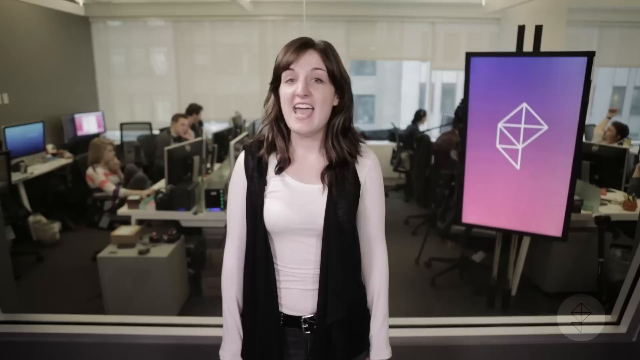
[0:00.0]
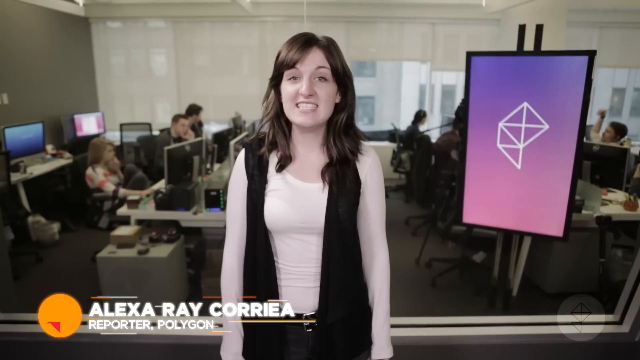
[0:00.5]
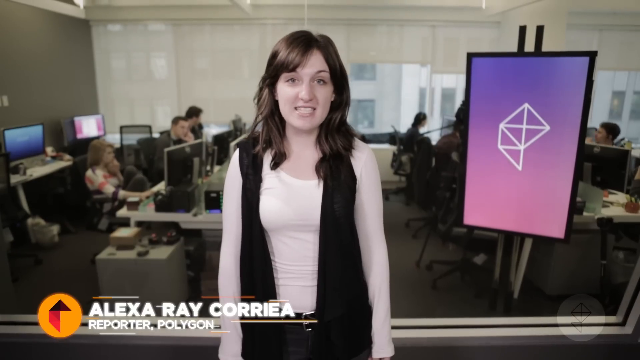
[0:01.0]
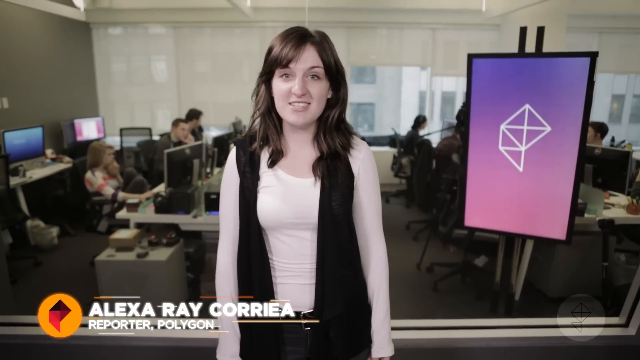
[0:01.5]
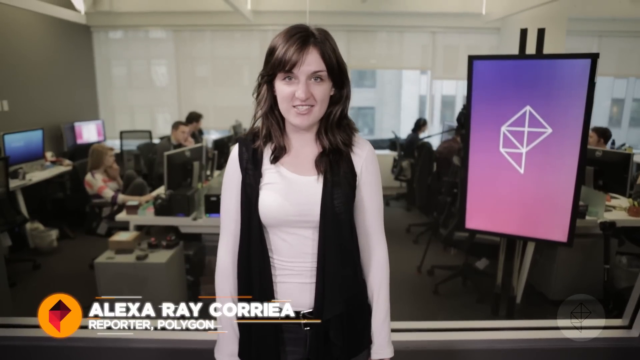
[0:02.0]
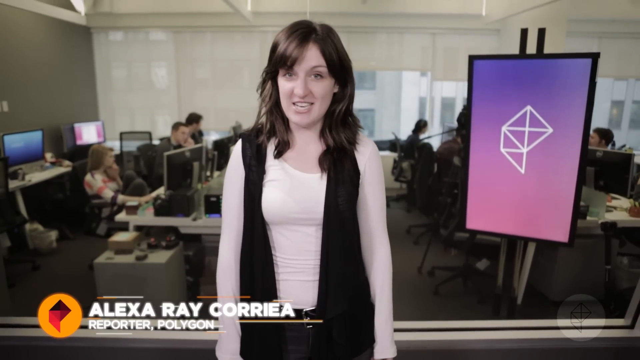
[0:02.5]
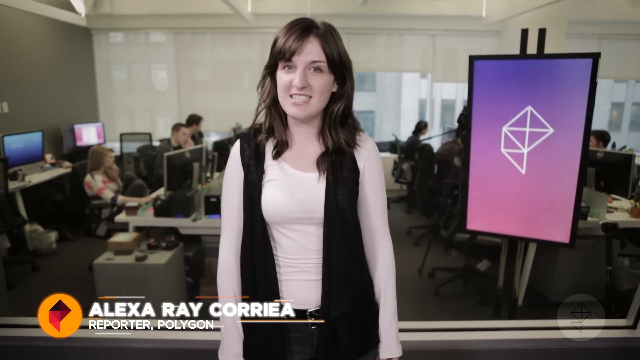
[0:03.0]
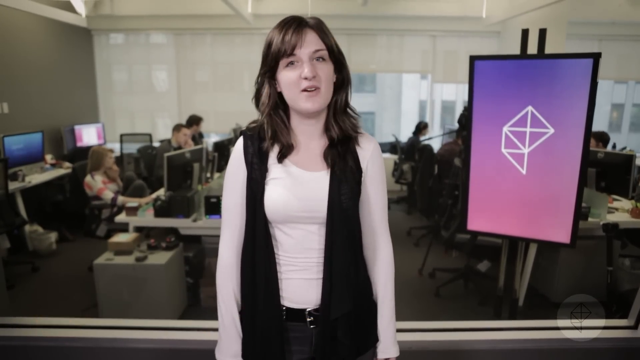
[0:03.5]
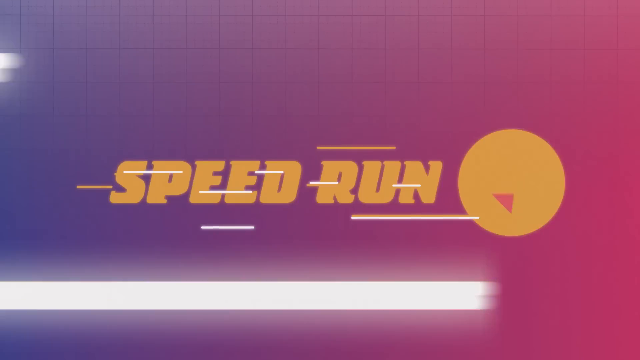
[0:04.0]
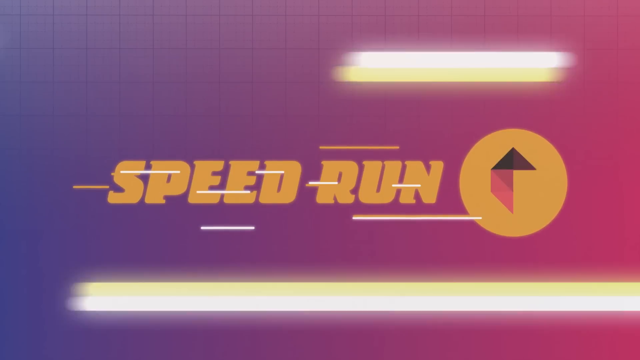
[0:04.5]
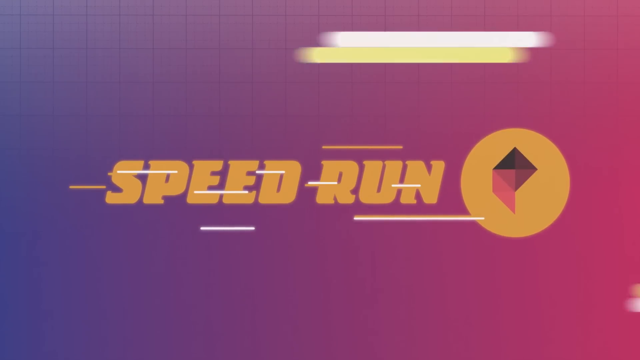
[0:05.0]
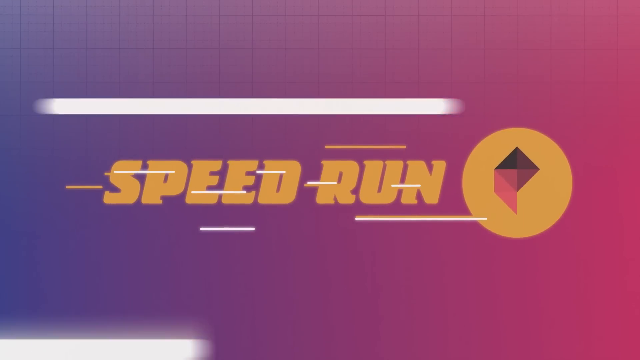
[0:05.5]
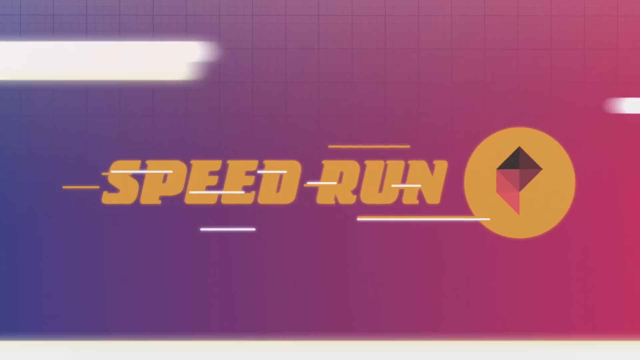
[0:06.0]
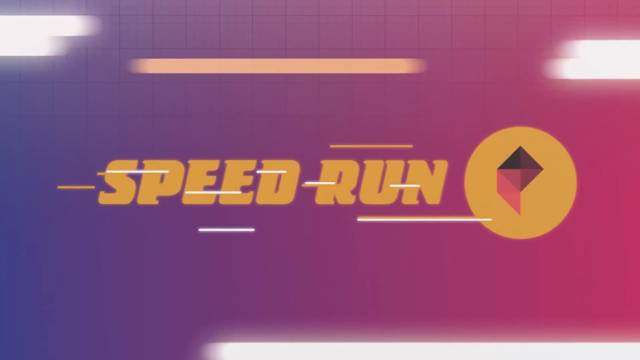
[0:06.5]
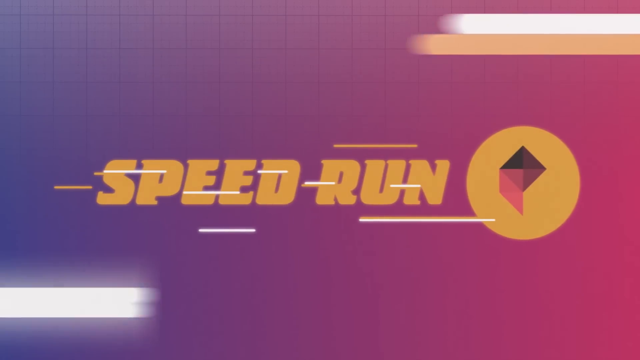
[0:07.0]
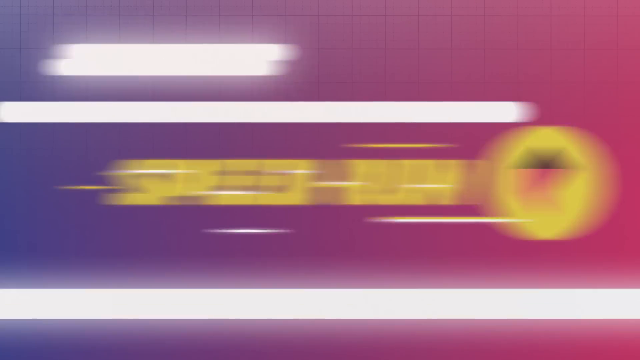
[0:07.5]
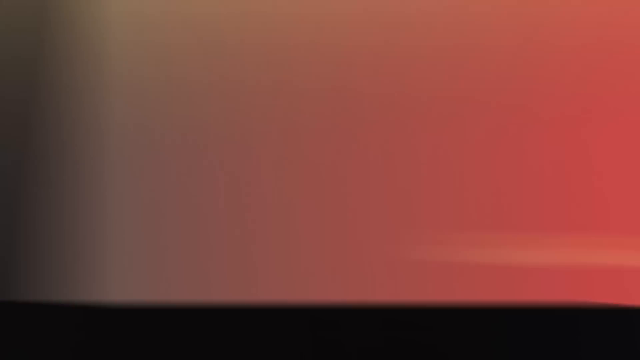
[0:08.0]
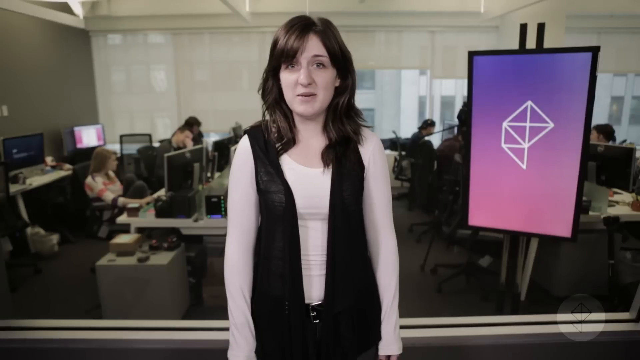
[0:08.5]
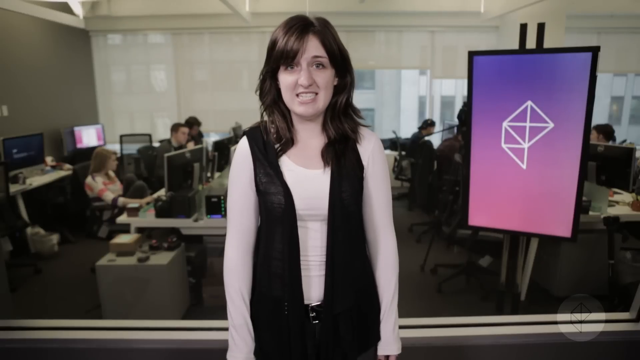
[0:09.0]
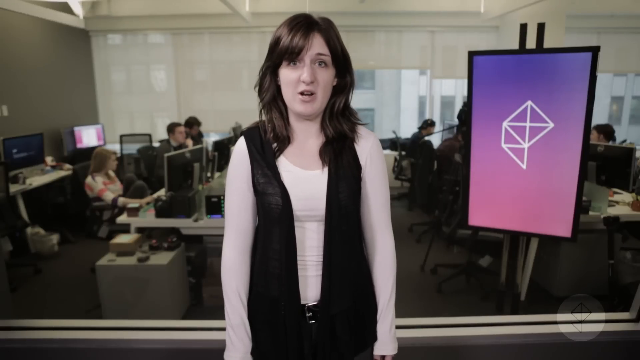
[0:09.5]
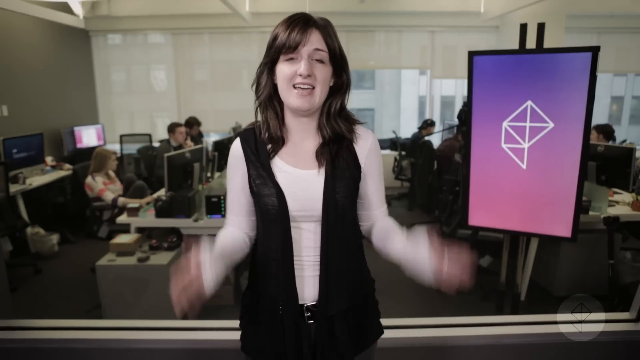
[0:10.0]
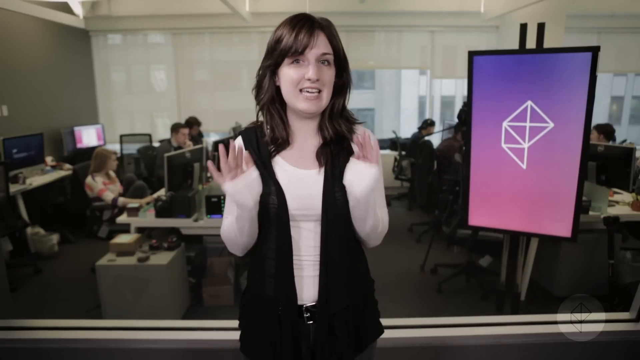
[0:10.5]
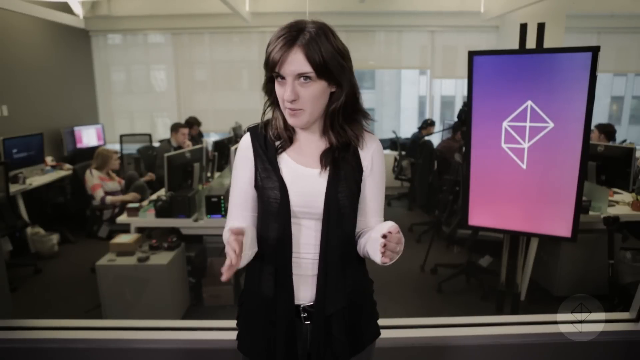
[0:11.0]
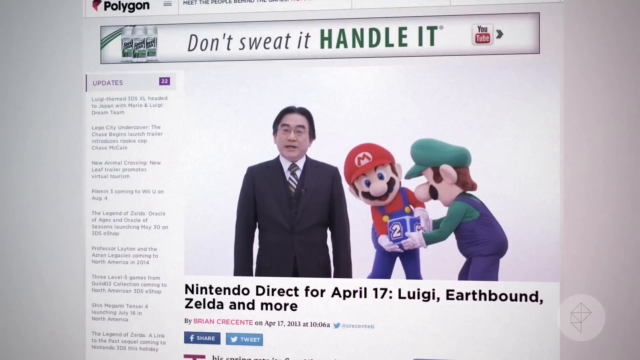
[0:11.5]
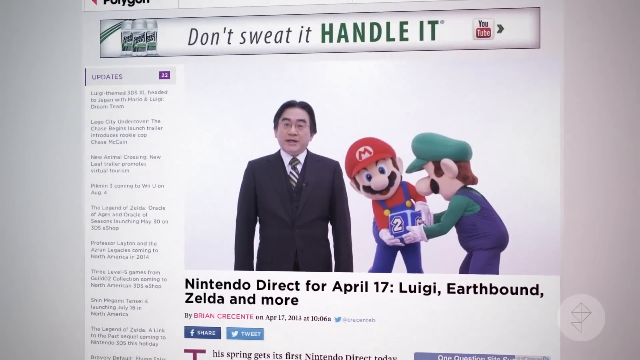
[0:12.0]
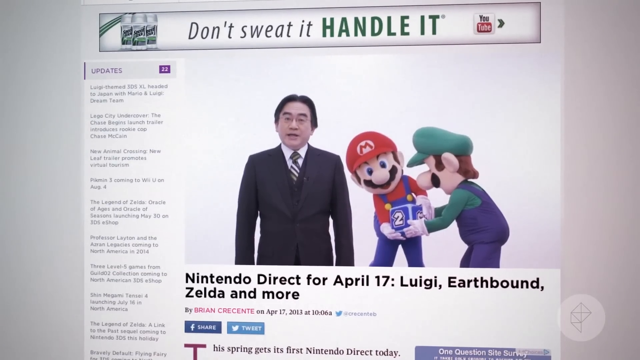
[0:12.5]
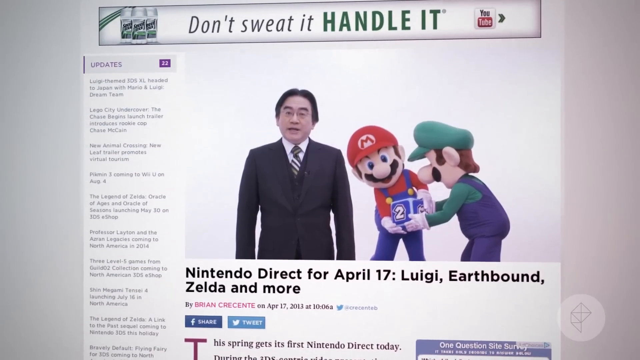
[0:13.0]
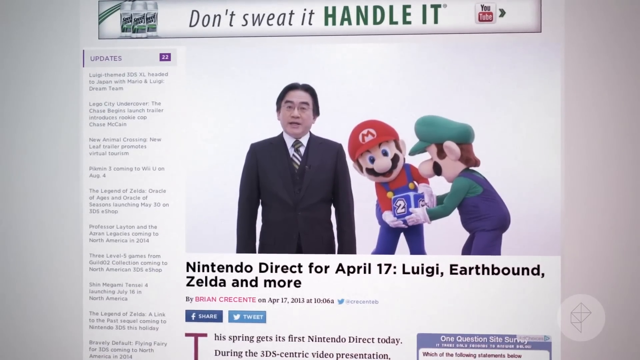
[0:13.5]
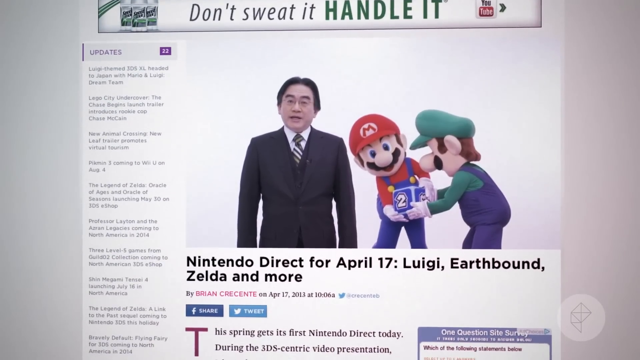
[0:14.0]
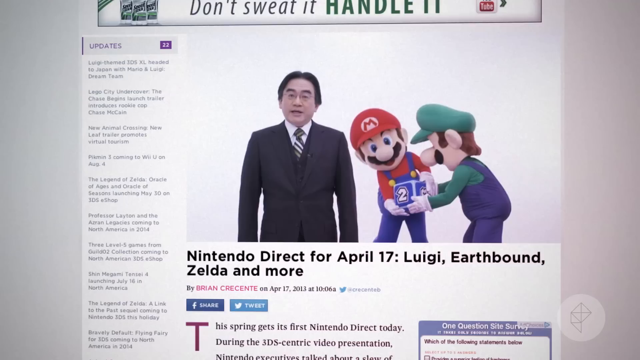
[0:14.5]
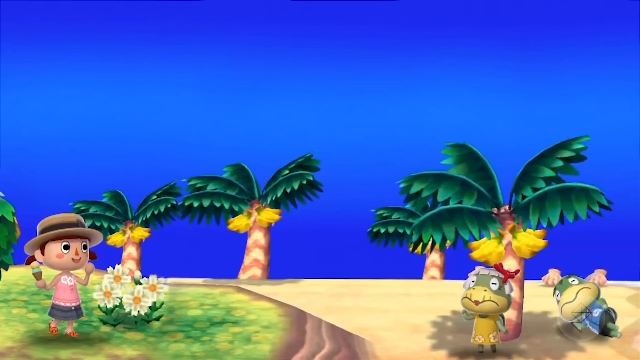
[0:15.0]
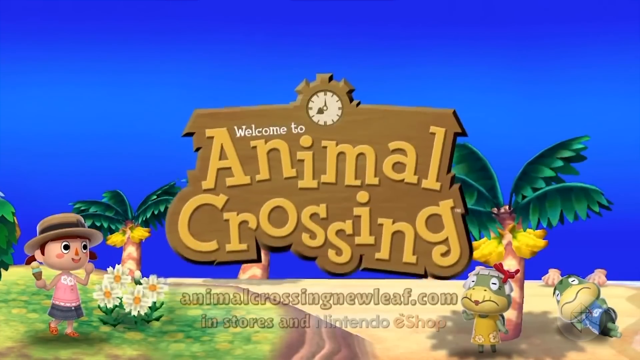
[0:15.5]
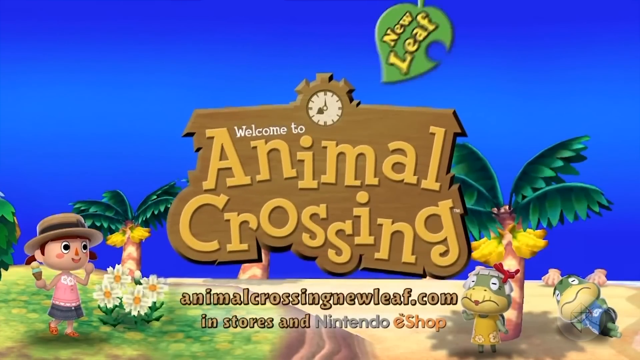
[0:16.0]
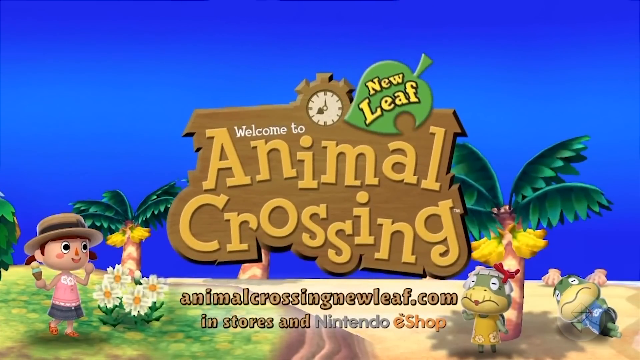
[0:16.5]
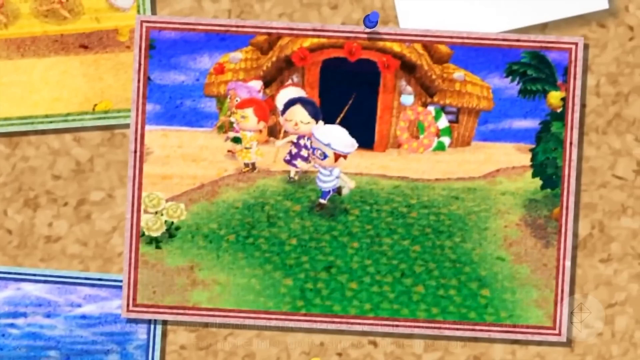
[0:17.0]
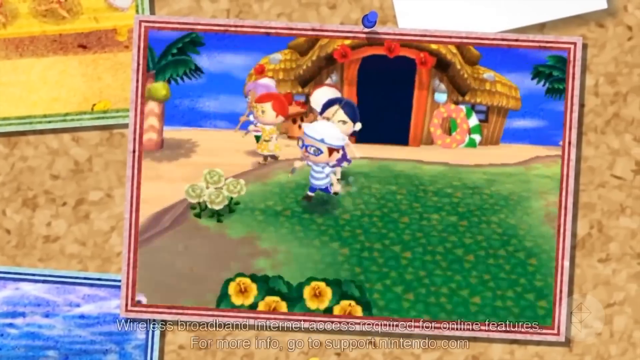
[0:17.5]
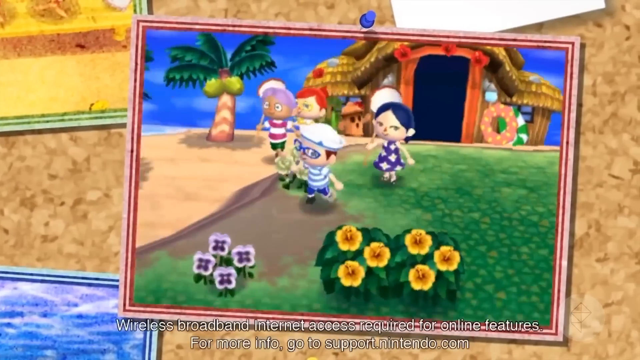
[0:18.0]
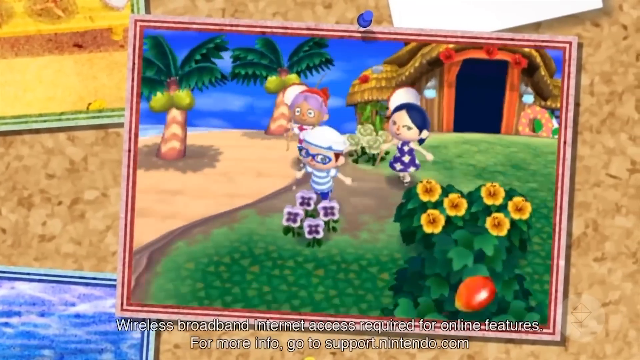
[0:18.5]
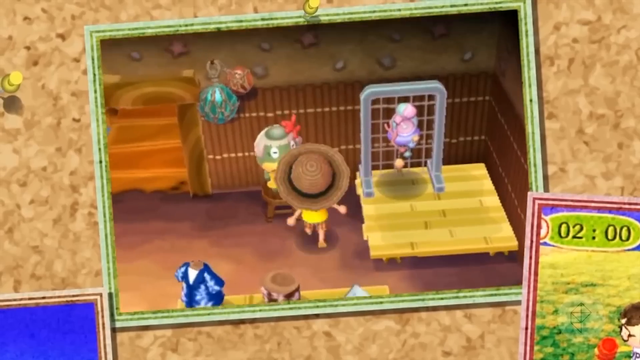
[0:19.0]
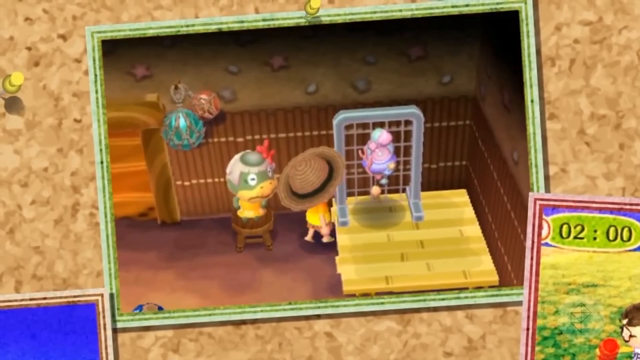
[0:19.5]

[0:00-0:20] A woman stands outside an office; text at the bottom of the screen gives her name as Alexa Rae Correa, and she is a reporter at Polygon. She is a white woman, maybe in her mid twenties to thirties, with shoulder-length brown hair, wearing a white long-sleeve shirt with a black vest. Behind her, people work at desks on computers. Next to her is a sort of monitor, a rectangular screen showing a half-finished cube symbol on a purple and pink background. She speaks to the camera enthusiastically, naturally and professionally. A title card shows the word "speedruns" in yellow text, animated so the text seems to be moving very fast. The video cuts back to her talking and using her hands. Next comes an article that reads "Nintendo Direct for April 17th, Luigi, Earthbound, Zelda and more," with a picture of Nintendo CEO Satoru Iwata alongside Mario and Luigi, who look like mascots, as if someone is in costume as them. The video then cuts to the loading screen of a video game called Welcome to Animal Crossing, with cartoon characters dressed in tropical clothing in the background, tropical trees, and some cartoony-looking Kappa cartoons.